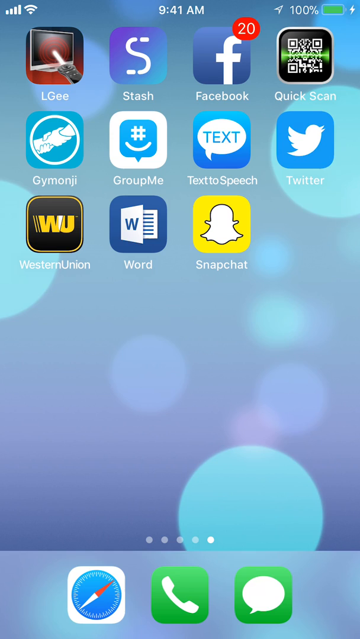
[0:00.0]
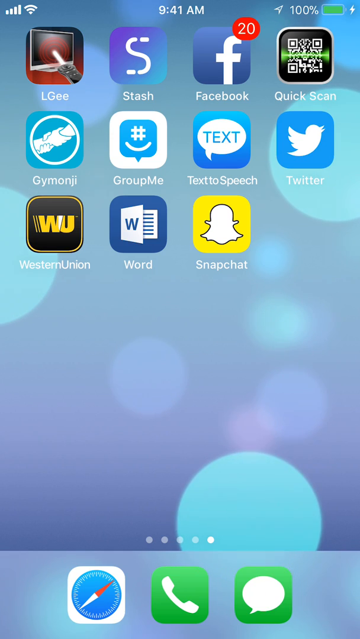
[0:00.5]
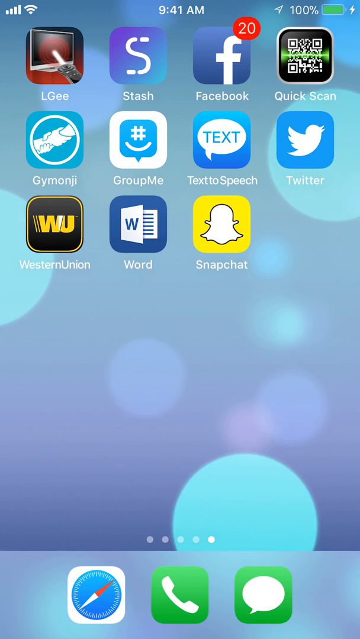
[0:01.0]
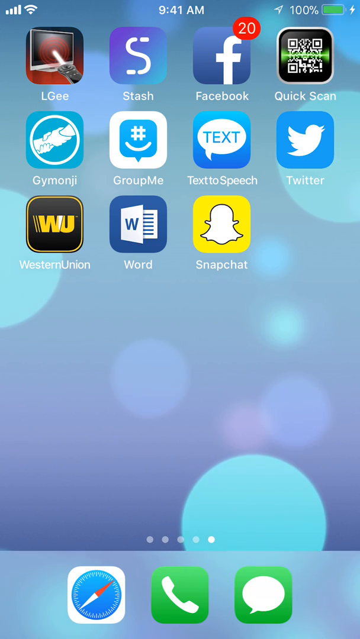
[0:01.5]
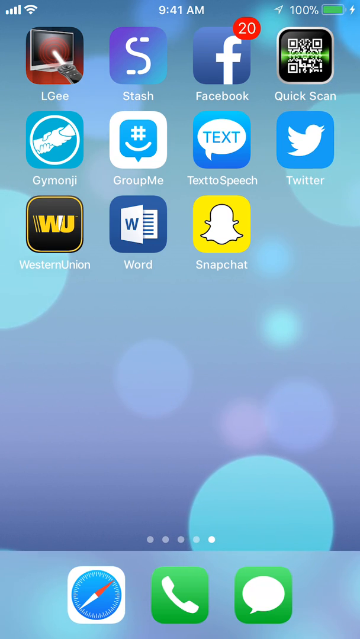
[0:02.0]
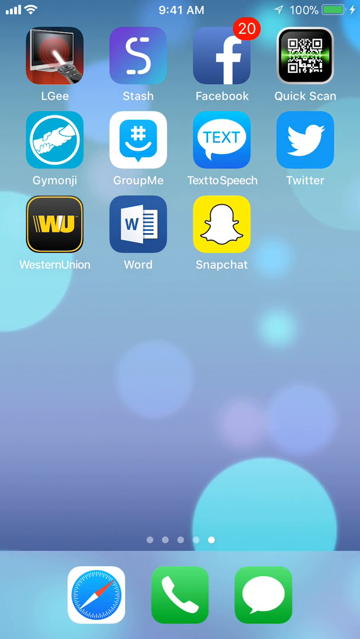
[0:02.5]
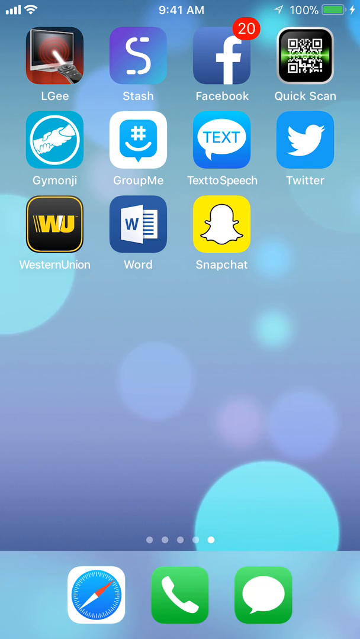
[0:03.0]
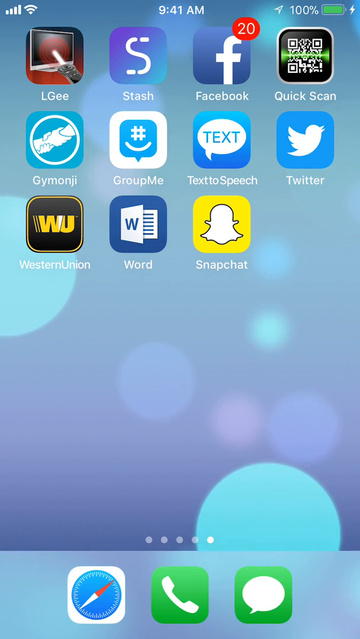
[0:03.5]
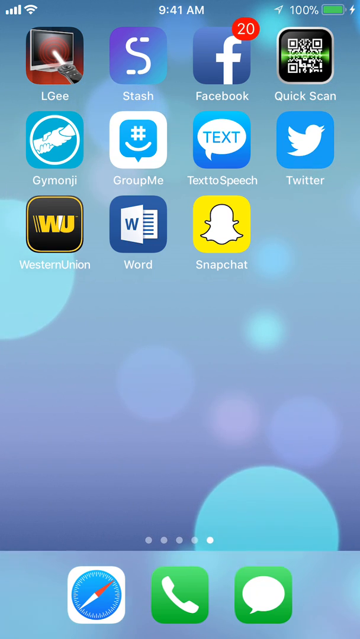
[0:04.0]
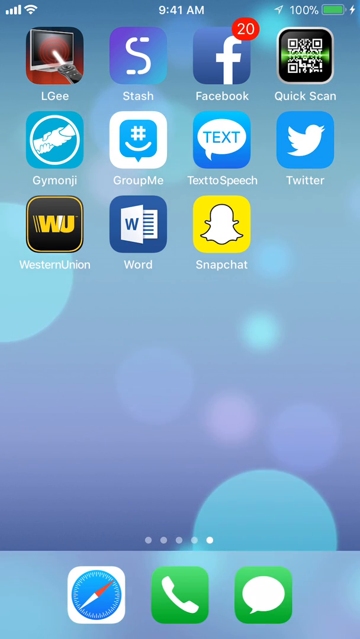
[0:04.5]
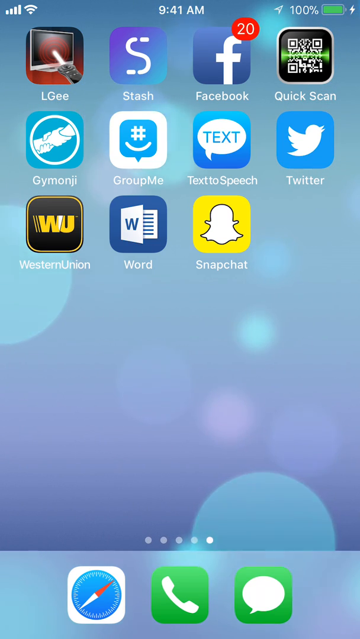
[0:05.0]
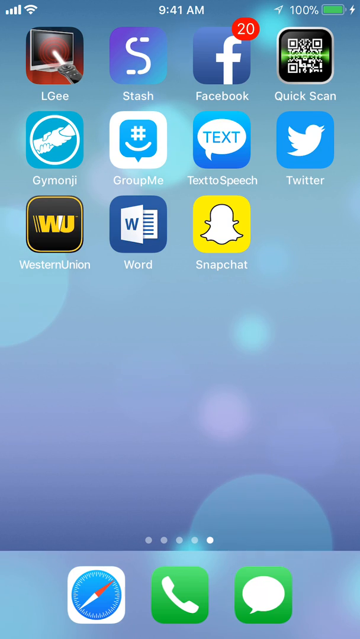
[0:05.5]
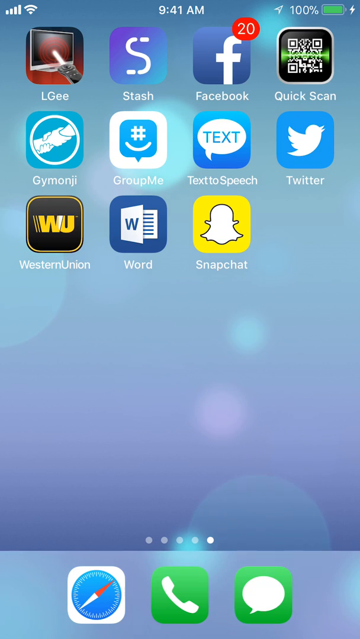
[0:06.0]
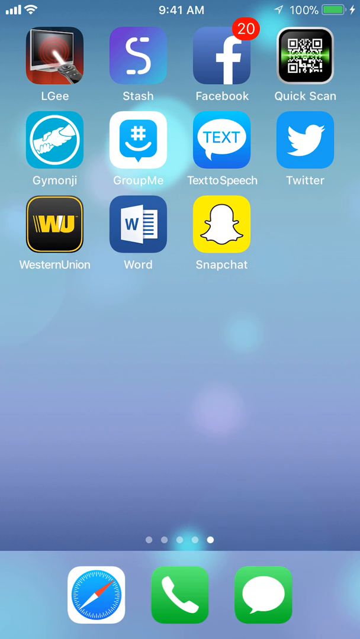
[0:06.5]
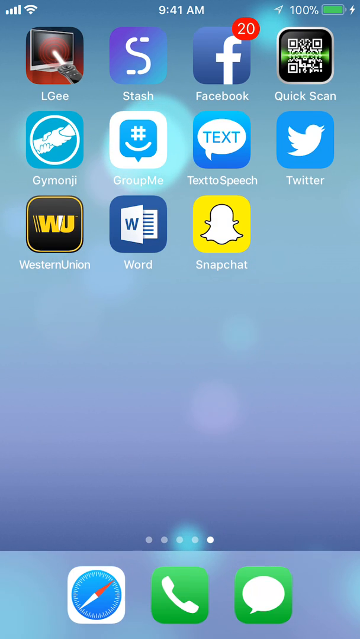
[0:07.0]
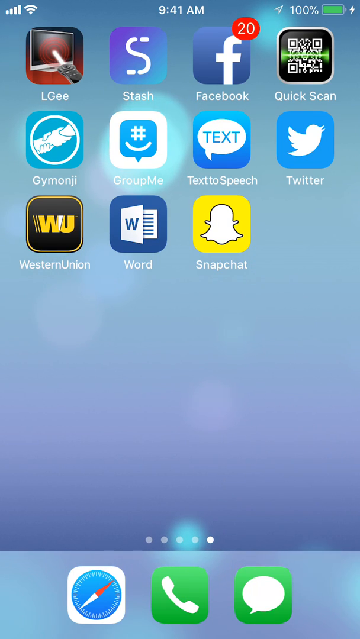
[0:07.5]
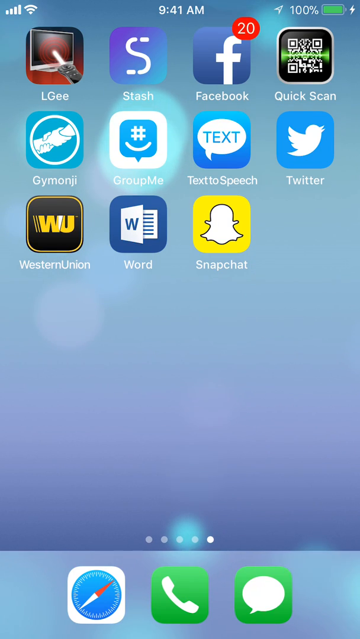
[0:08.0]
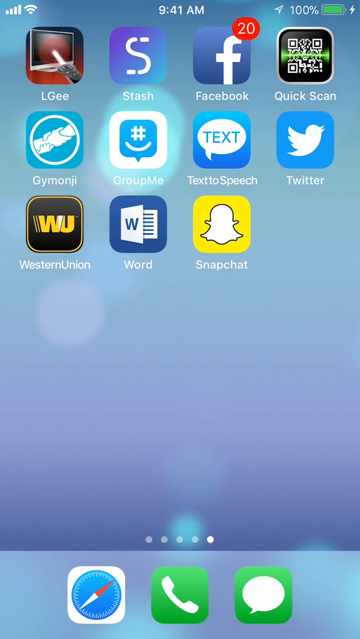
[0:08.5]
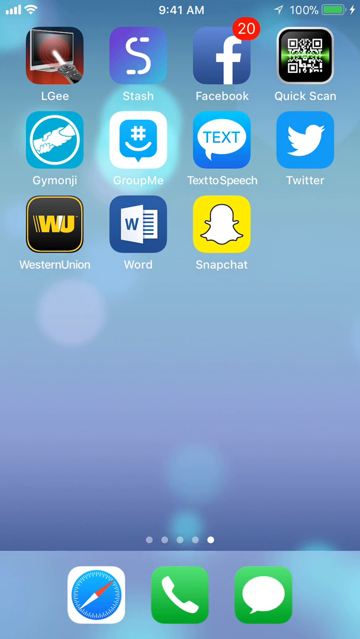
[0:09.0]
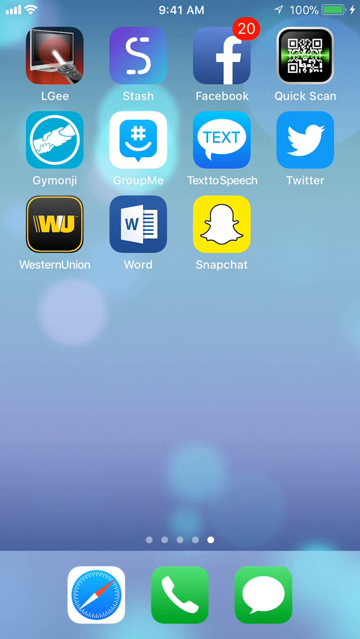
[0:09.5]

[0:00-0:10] A phone screen appears, looking like a screenshot, though it seems live because the background is blue with some purple shades in it. Apps include Facebook, QuickScan, Twitter, Text-to-Speech, Snapchat, Word, WU, GroupMe, Stash and some other unidentified ones. Along the bottom are a call button, a WhatsApp button and another unidentified icon that is somewhat reminiscent of NASA. The battery is at 100% and the time is 9:41 a.m. Little else happens except that bubbles kind of move around a little and disappear and reappear.